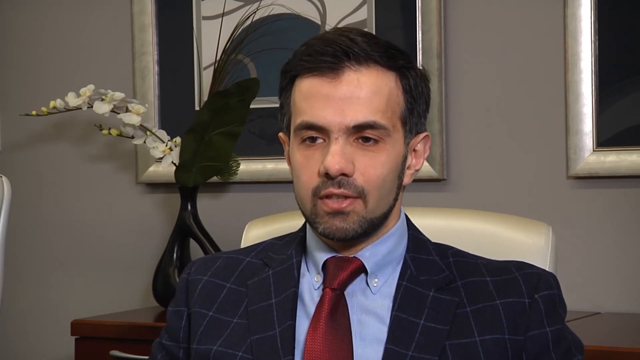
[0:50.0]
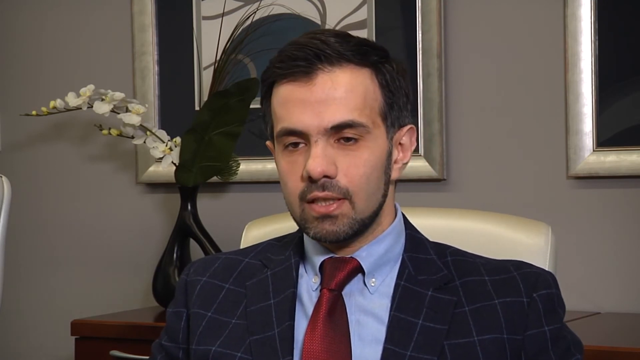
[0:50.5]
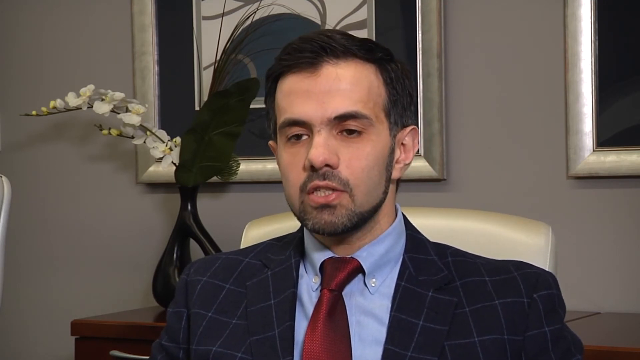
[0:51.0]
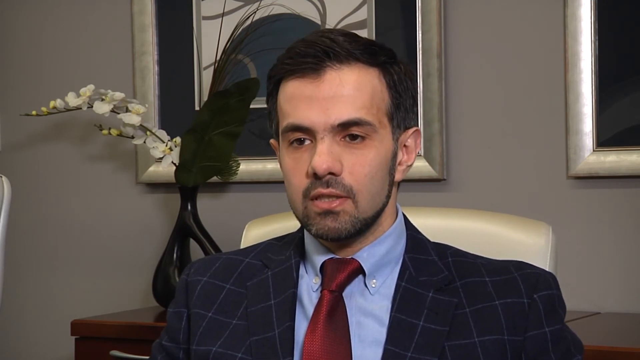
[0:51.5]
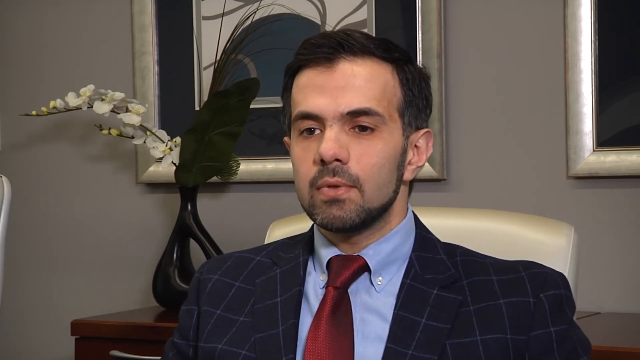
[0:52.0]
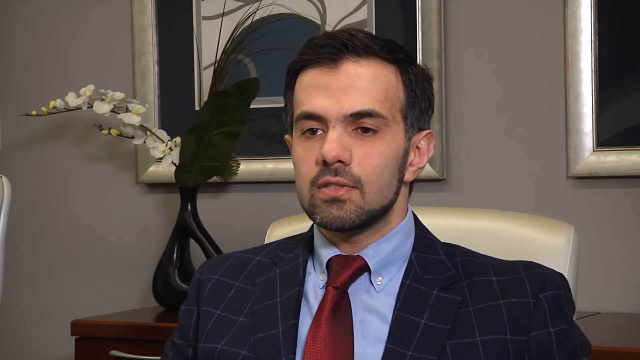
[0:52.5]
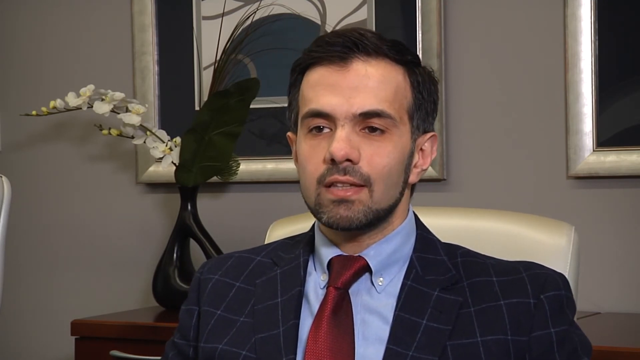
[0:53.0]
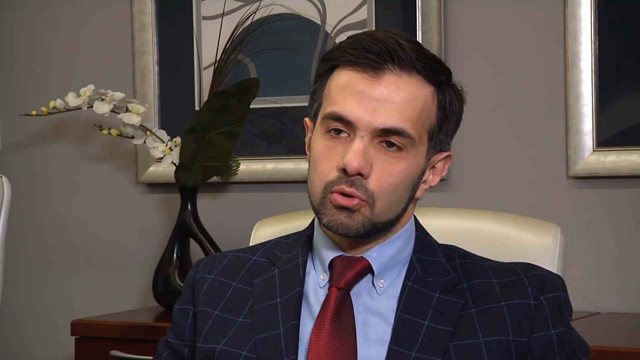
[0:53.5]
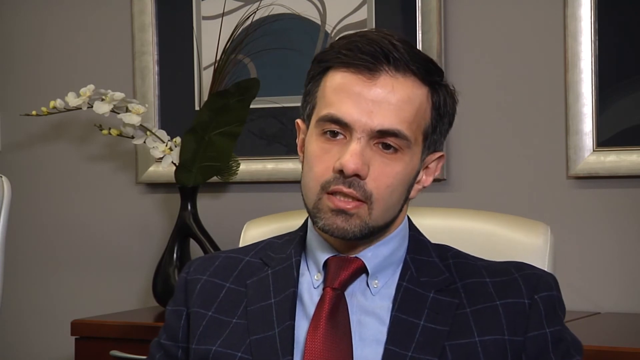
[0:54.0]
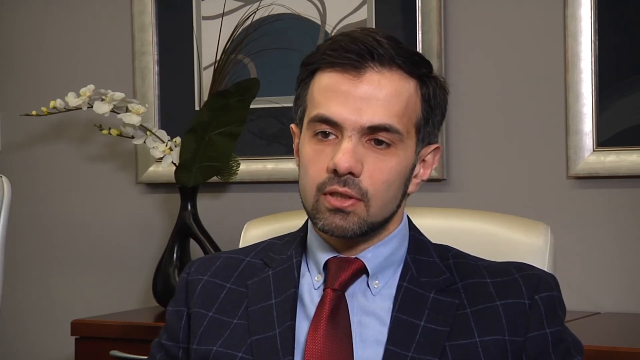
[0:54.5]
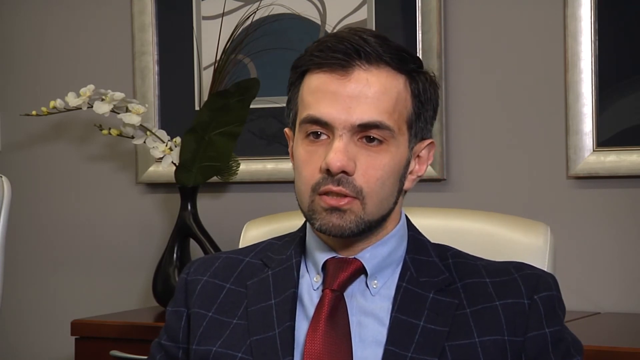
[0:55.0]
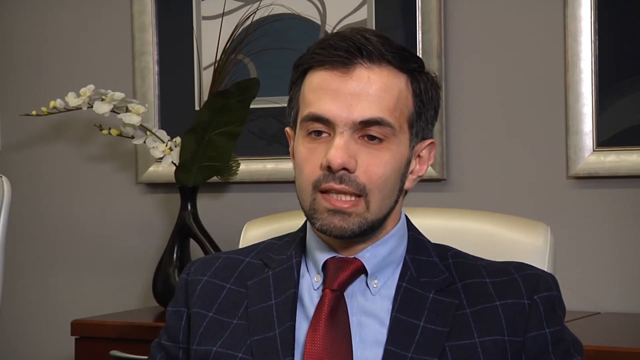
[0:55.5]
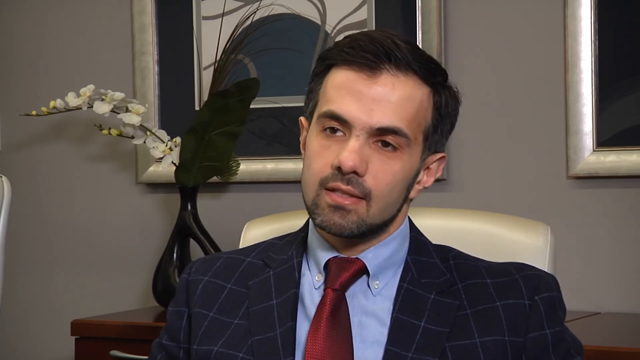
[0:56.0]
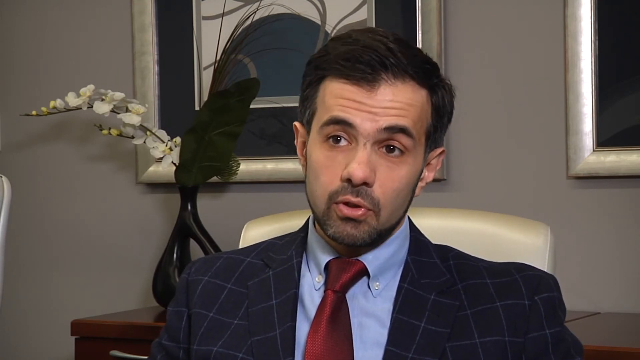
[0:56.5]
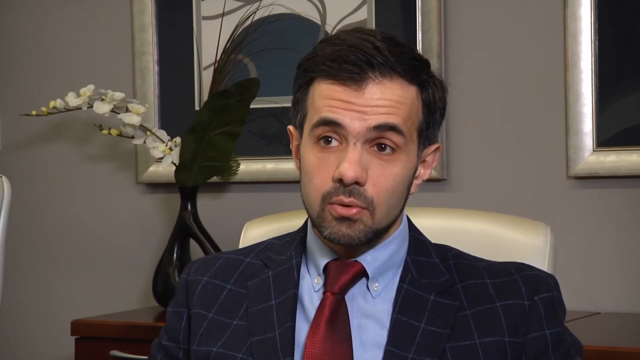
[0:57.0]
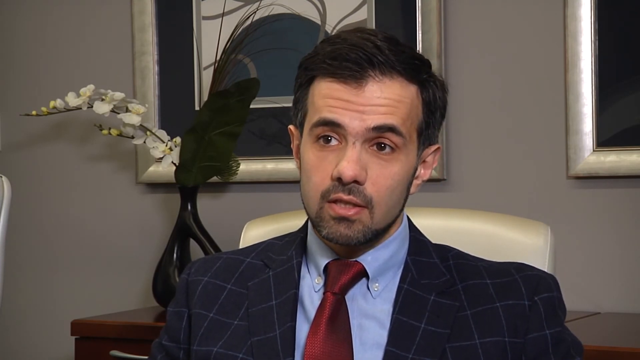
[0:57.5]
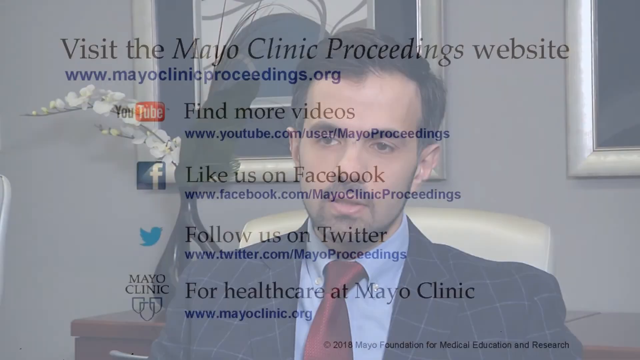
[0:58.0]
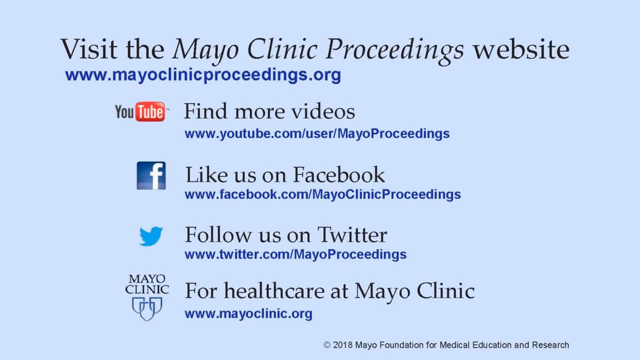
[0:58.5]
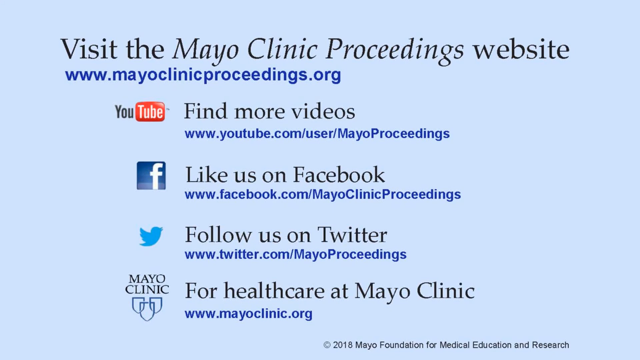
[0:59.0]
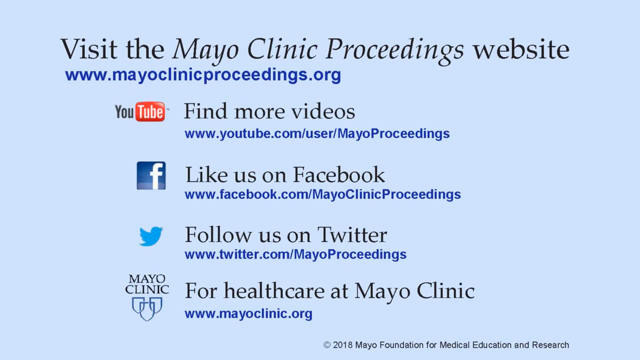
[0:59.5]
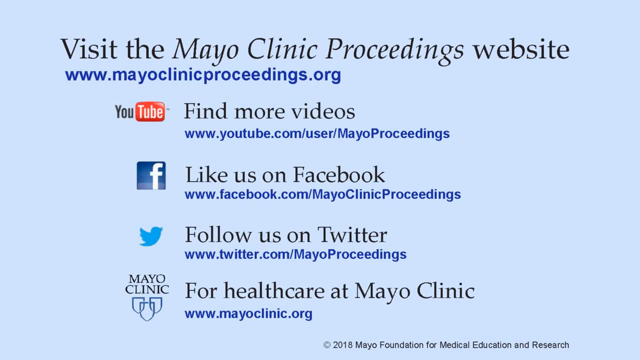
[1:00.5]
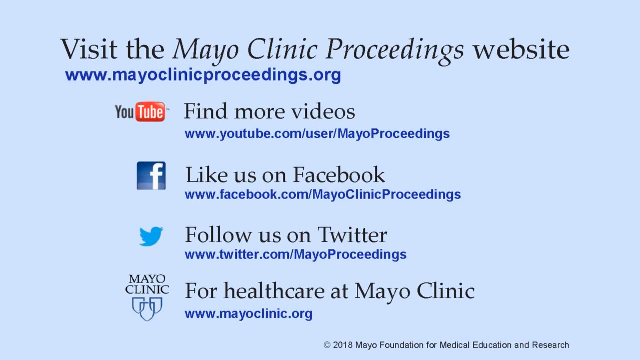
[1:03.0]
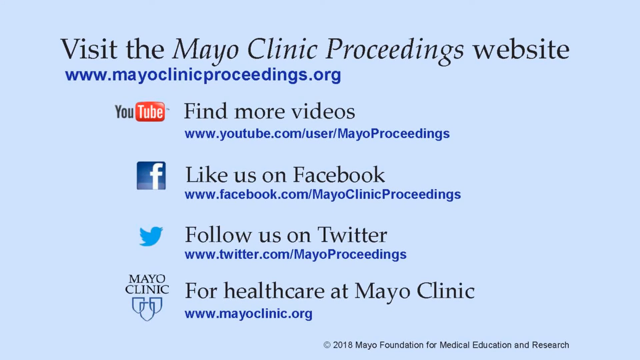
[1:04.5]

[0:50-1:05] The same man is shown talking to camera. He has dark hair, dark eyes, a beard turning white, white but not alarmingly white teeth, and skin that is tan but not very. He wears a blue suit with a thin grey check line, a blue button-down shirt, and a maroon tie. He is sitting in a creamy white leather chair in a greyish room with art on the walls in a silver frame with a black mat, the art itself black, grey and white. A sculptural thing is on a shelf behind him; the shelf is not visible, and not enough of the sculptural thing is visible to identify it. After some time he stops talking, and a closing page appears that says "visit the Mayo Clinic Proceedings website" with the URL, followed by links to find more videos on YouTube, to like them on Facebook or Twitter, and a sort of general link for Mayo Clinic itself.